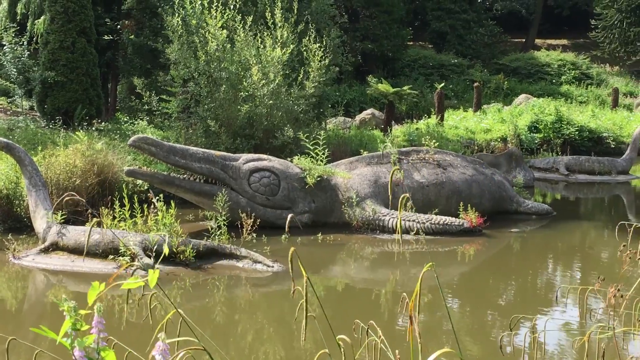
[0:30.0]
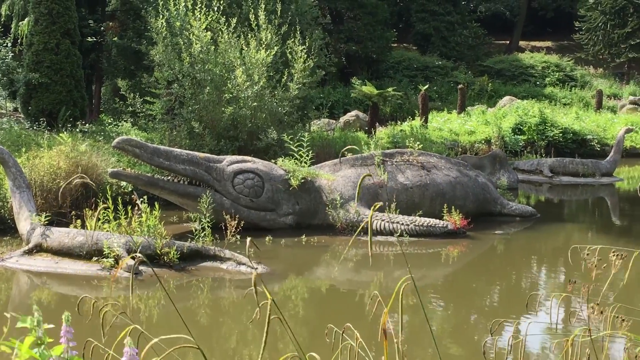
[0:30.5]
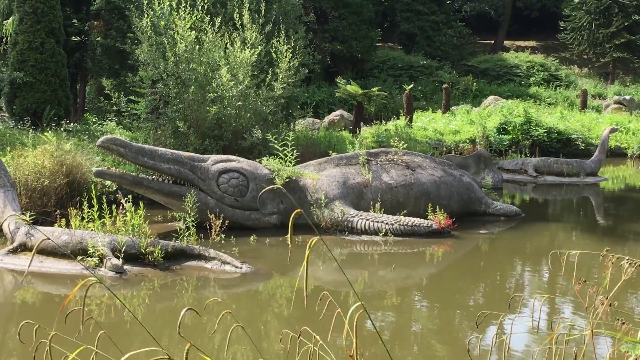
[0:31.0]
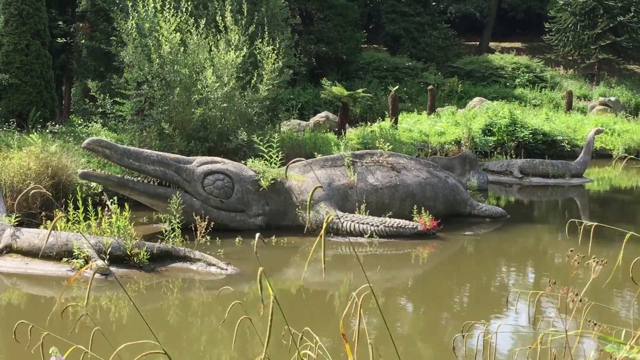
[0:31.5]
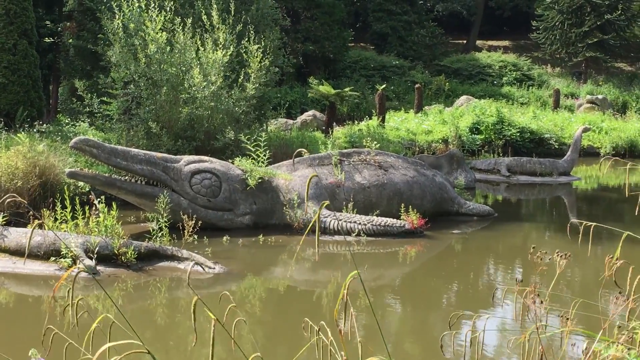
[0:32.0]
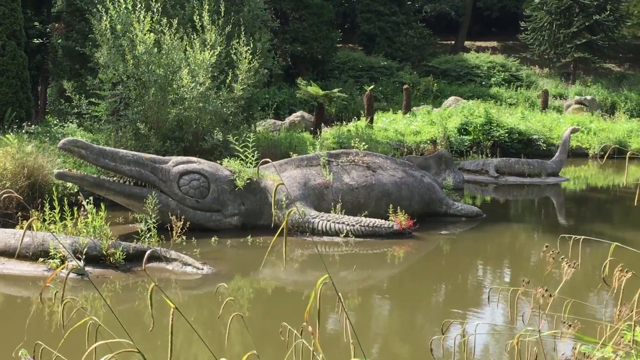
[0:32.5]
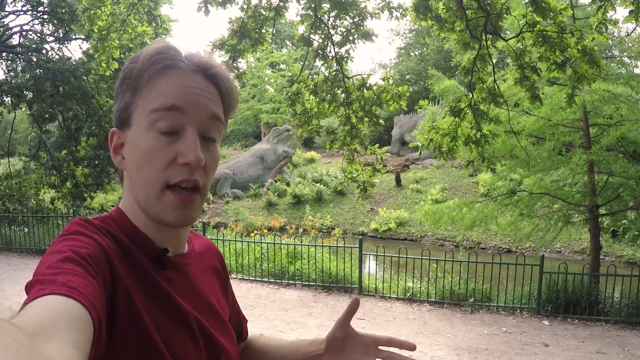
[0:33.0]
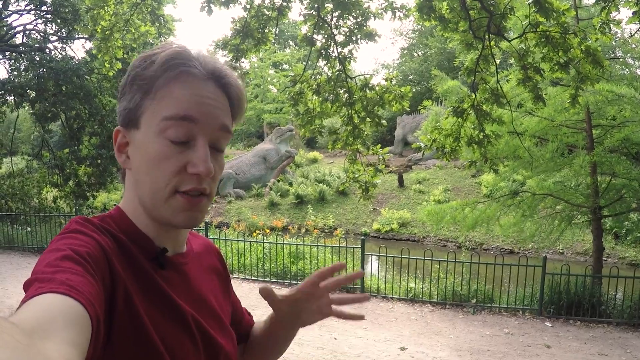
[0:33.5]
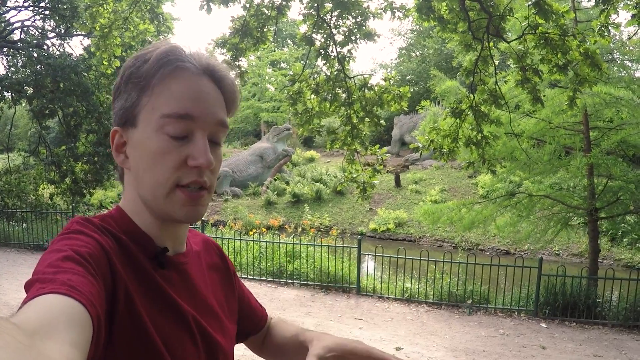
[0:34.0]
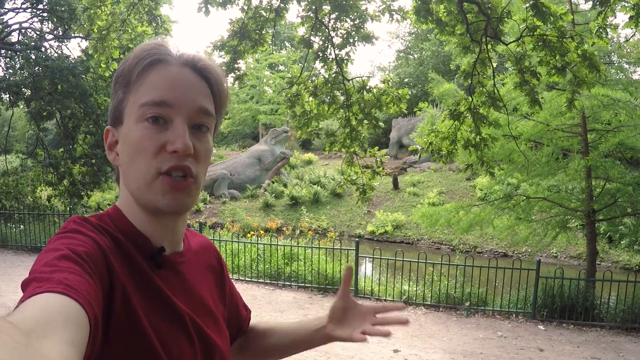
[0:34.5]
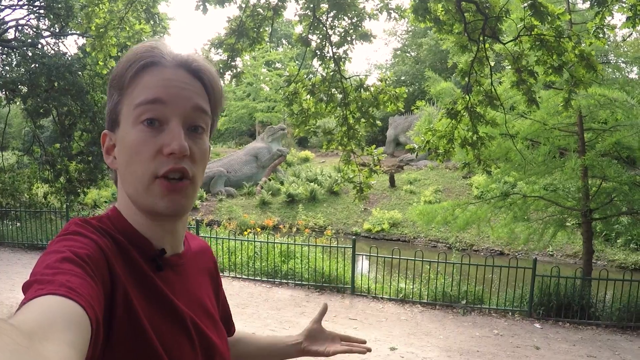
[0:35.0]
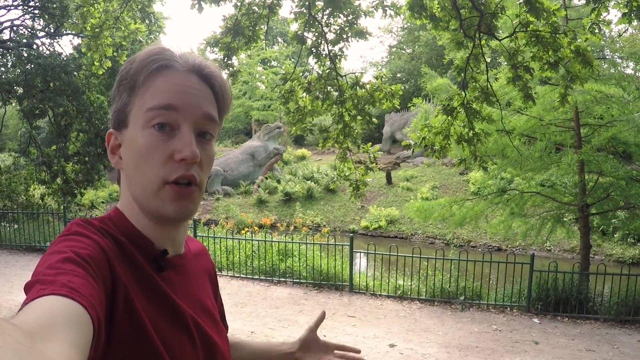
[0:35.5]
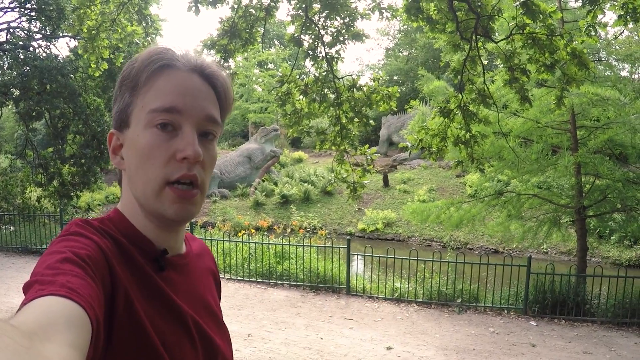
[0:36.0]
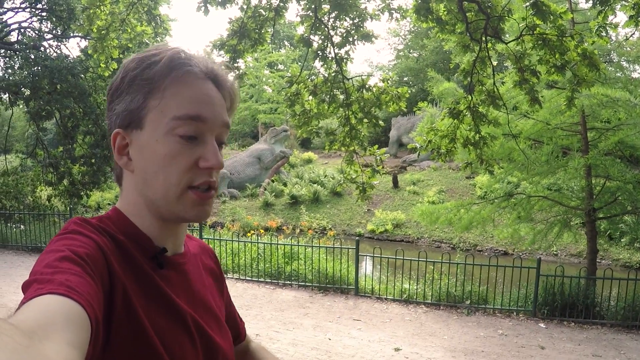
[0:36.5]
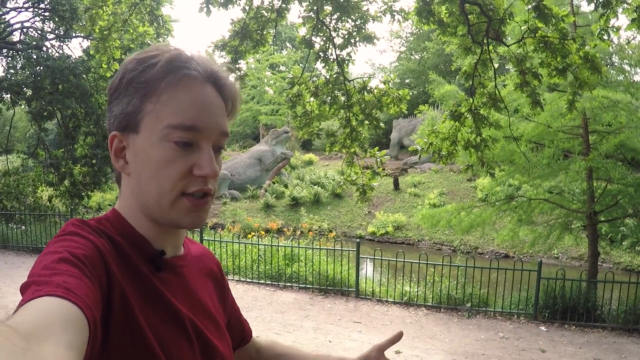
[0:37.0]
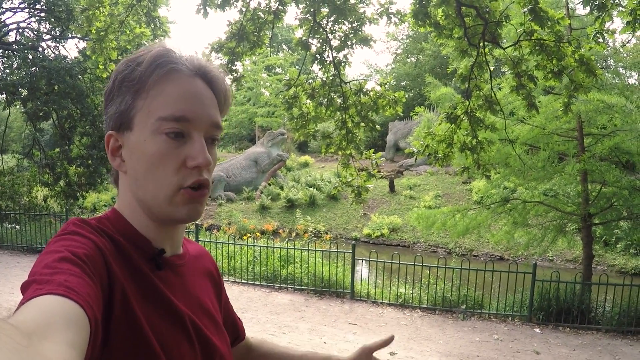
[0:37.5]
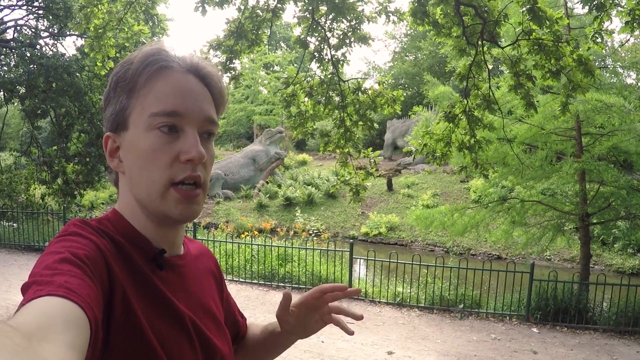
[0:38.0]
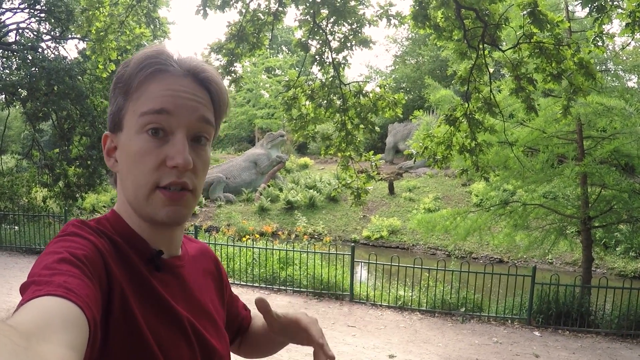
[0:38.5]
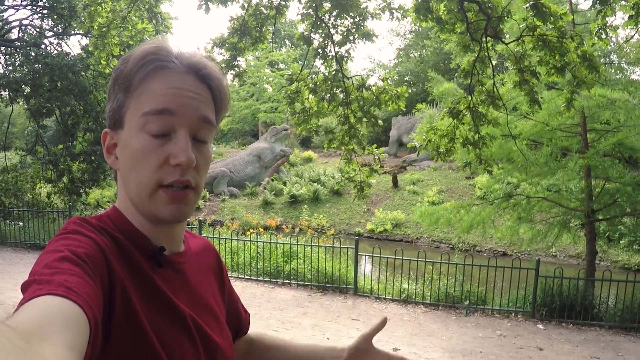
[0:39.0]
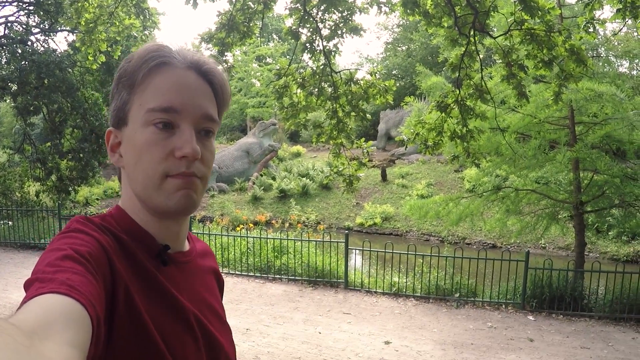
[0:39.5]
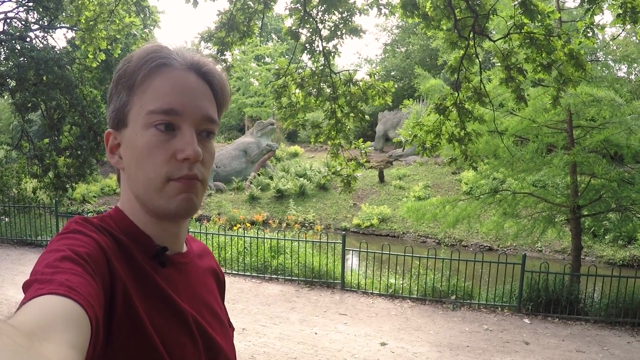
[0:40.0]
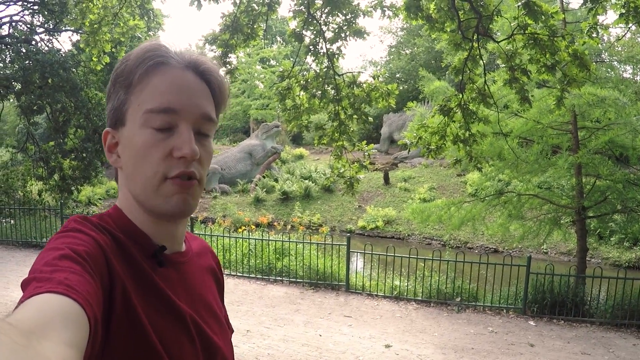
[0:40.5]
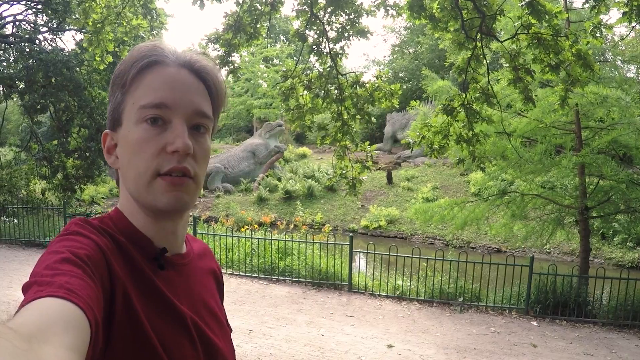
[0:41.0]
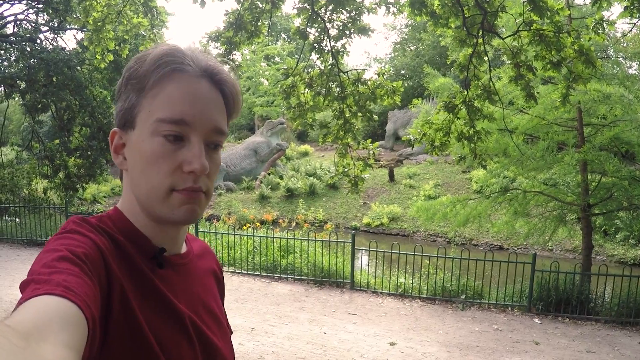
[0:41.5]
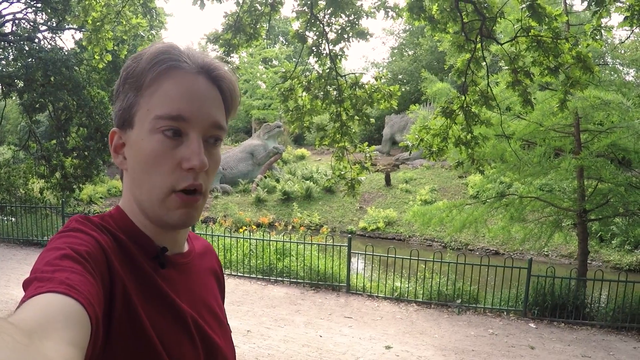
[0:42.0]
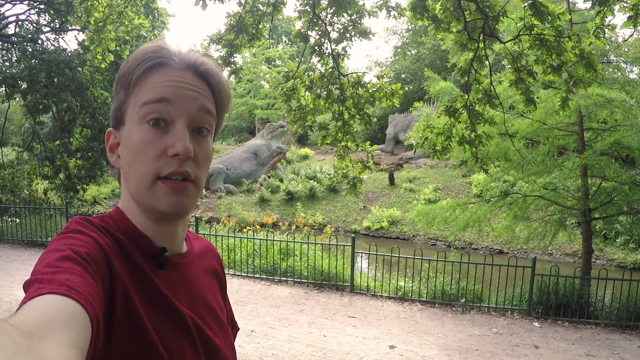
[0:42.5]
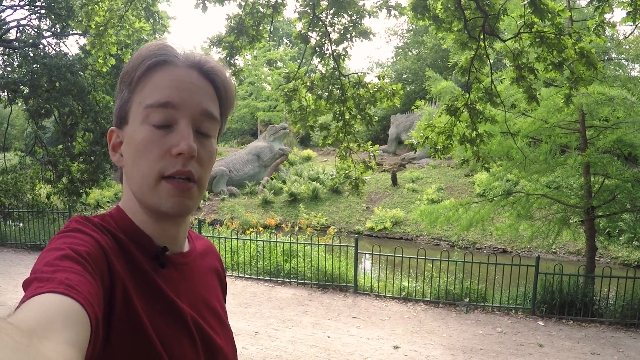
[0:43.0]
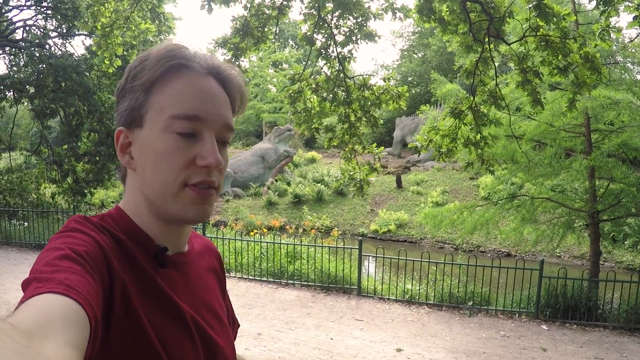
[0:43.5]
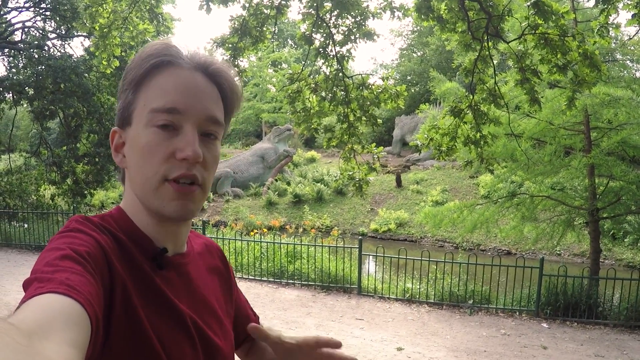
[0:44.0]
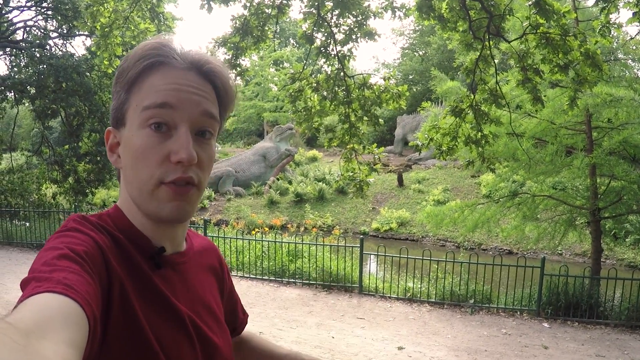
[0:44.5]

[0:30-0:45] A close-up shows dinosaur models that look like statues in an outdoor park. One statue looks like a dinosaur with a long snout and its mouth open to show sharp teeth, with a large eye on the side of its head. It faces to the side, giving a side view, and it is sitting in water with other statues around it. The water is murky and brown, and behind it are lush grass and the bottoms of trees. The video switches back to a close-up of the presenter speaking. He gestures with one hand while he seems to be holding a camera phone in the other, and he has a microphone clipped to the top of his short-sleeved red t-shirt. Behind him is a display of other dinosaur statues in a lush green setting surrounded by trees, with a short metal fence in front of it and a small rolling hill covered in grass that the statues are on. He is standing on a paved walkway in front of the fence as he speaks, and he continues to look from side to side and gesture.